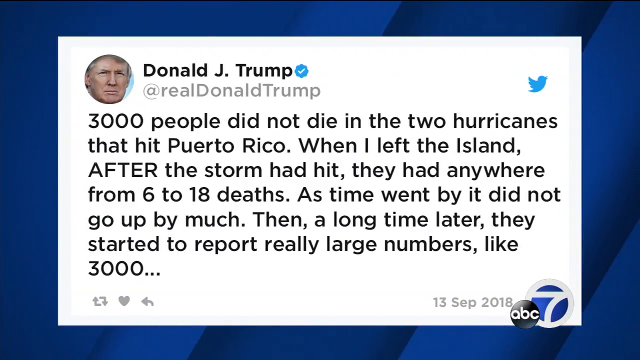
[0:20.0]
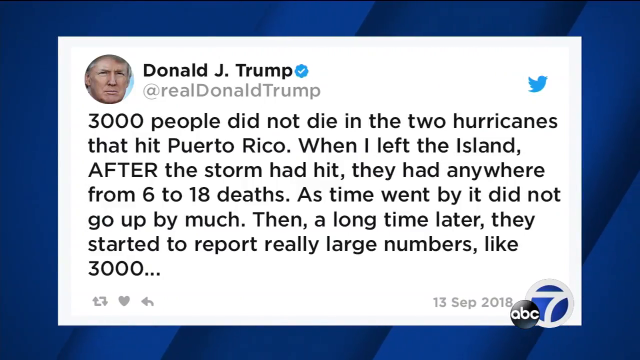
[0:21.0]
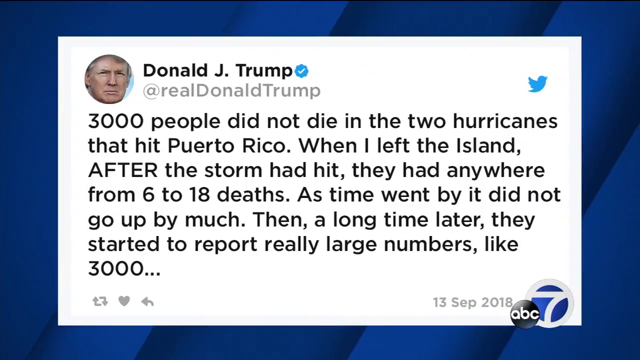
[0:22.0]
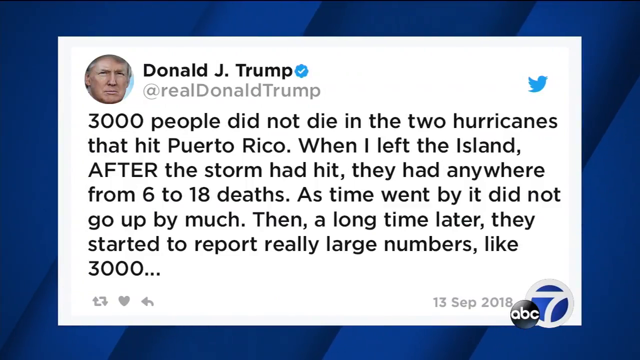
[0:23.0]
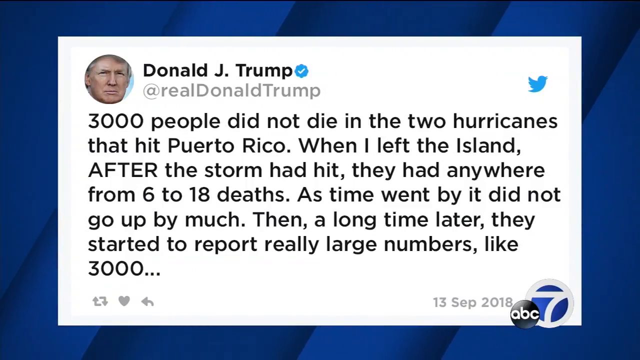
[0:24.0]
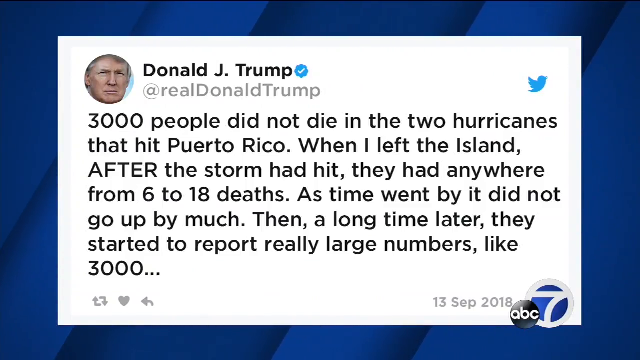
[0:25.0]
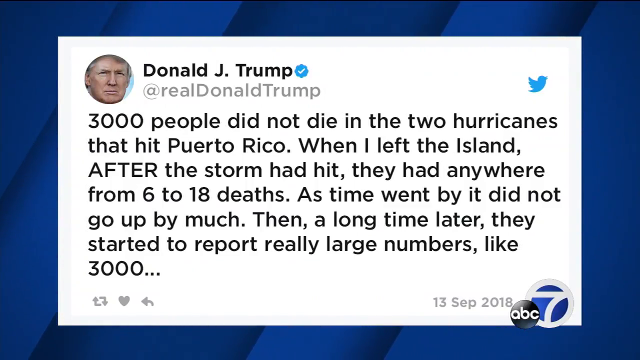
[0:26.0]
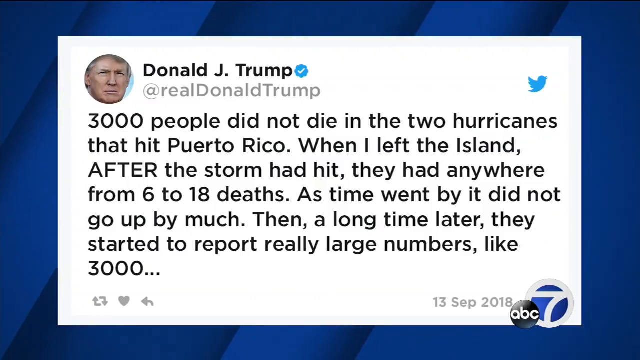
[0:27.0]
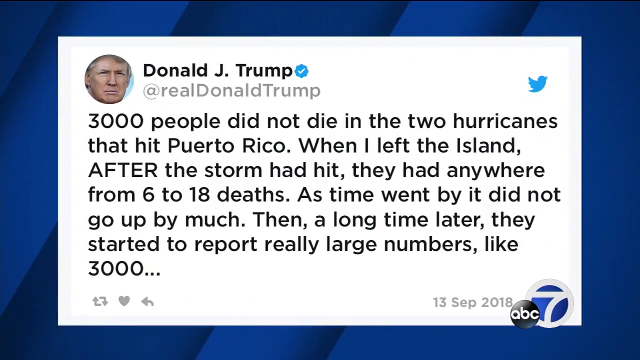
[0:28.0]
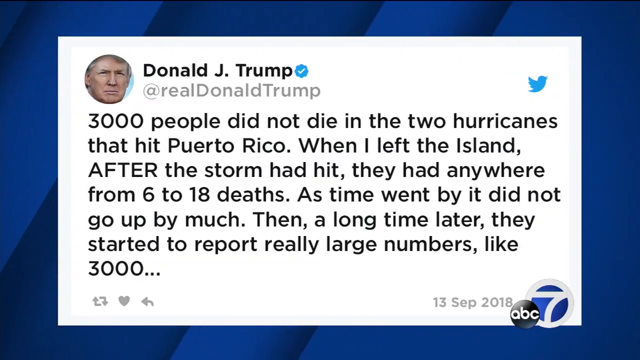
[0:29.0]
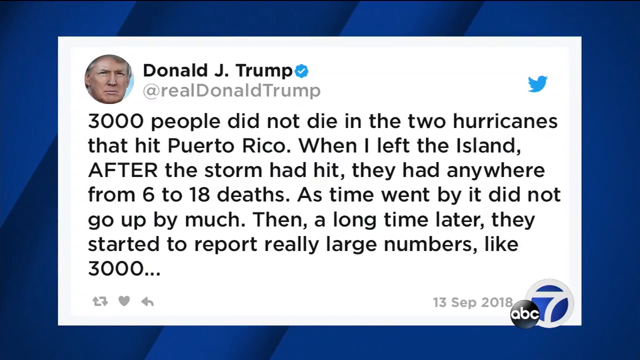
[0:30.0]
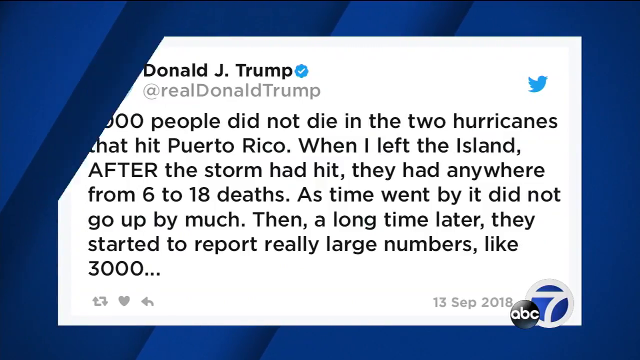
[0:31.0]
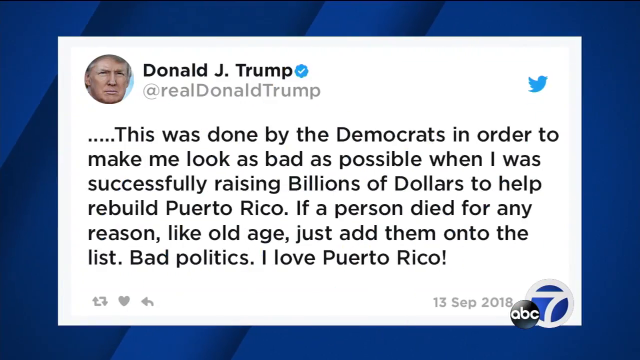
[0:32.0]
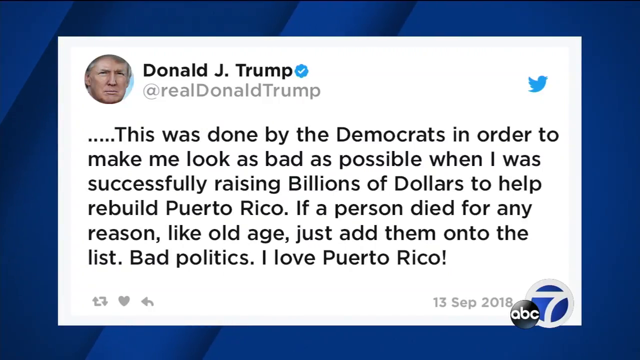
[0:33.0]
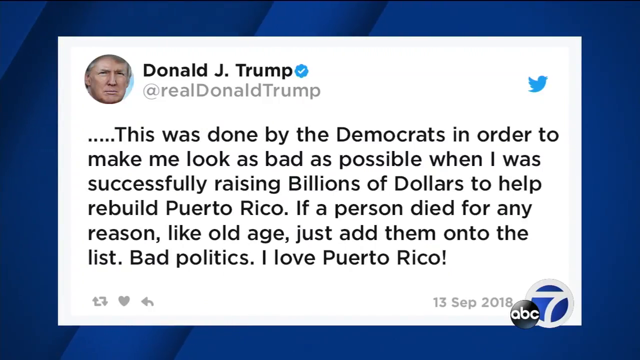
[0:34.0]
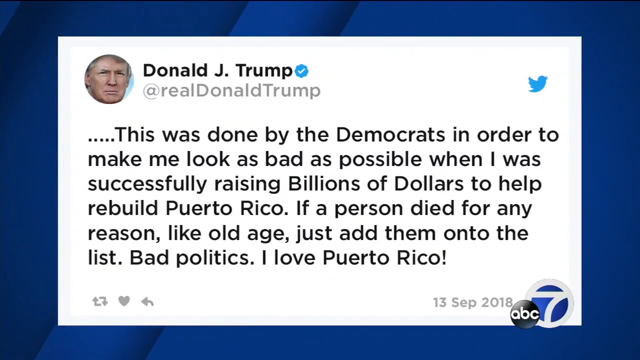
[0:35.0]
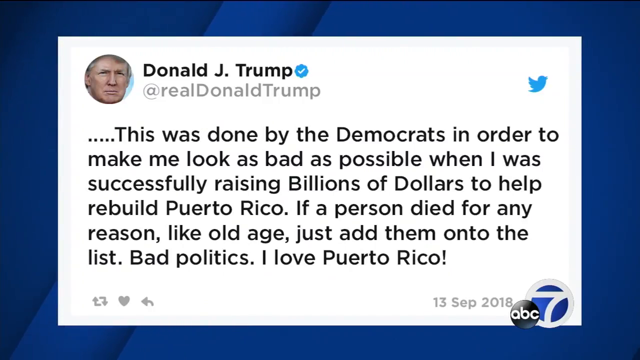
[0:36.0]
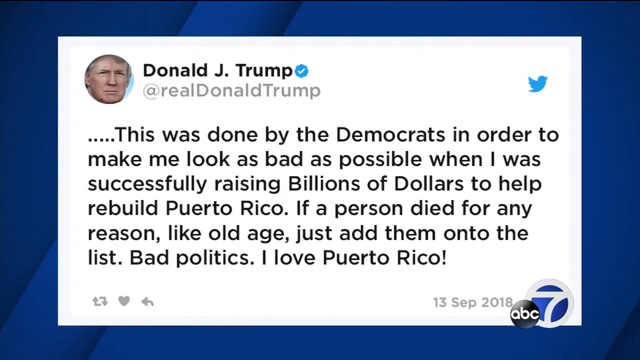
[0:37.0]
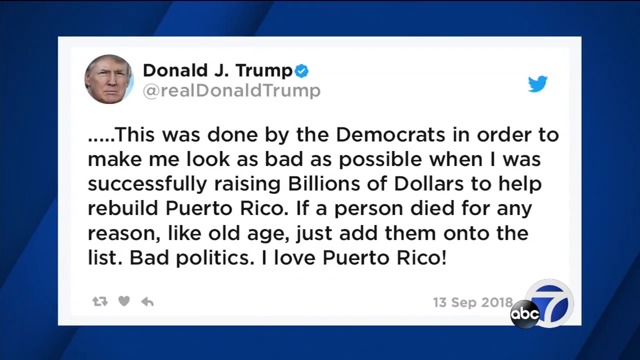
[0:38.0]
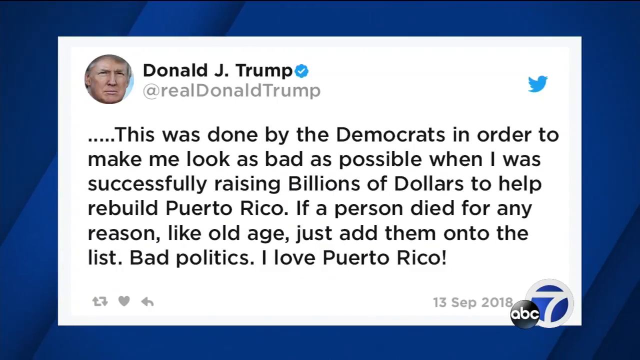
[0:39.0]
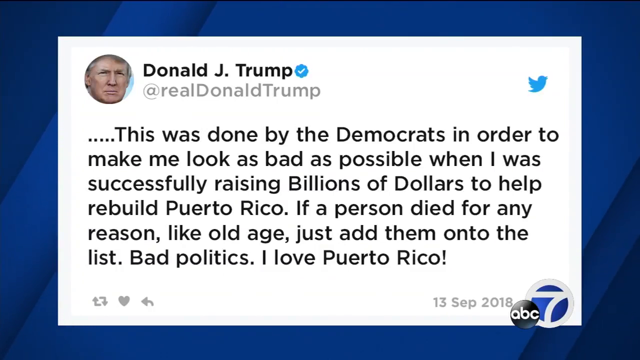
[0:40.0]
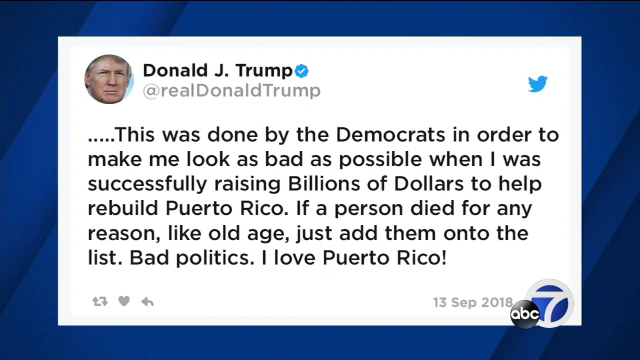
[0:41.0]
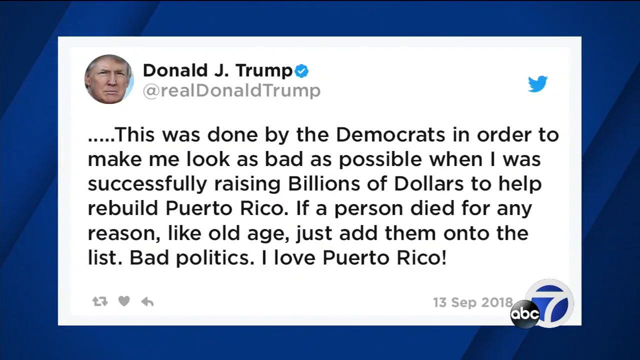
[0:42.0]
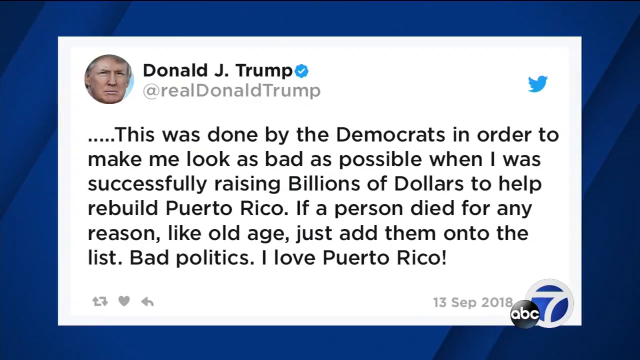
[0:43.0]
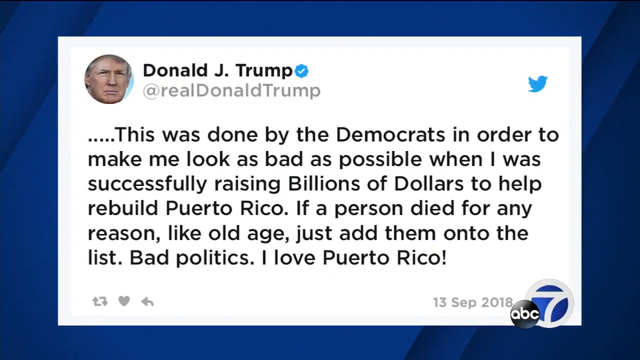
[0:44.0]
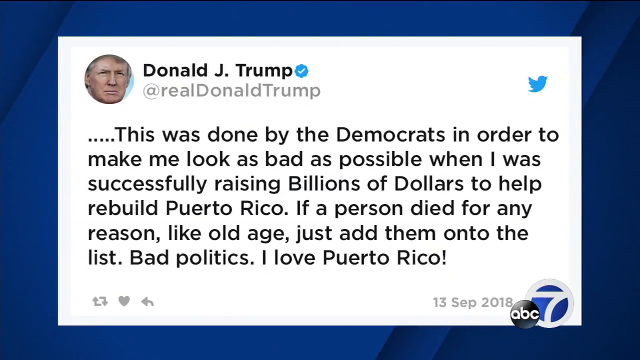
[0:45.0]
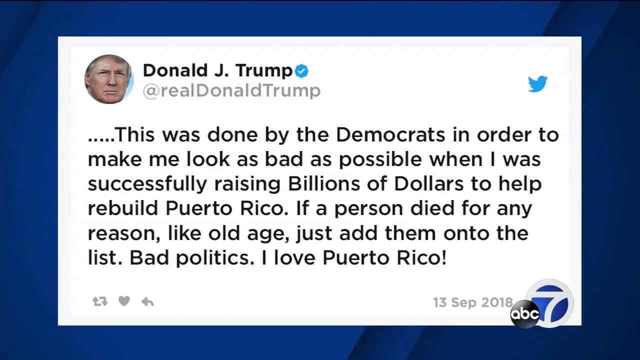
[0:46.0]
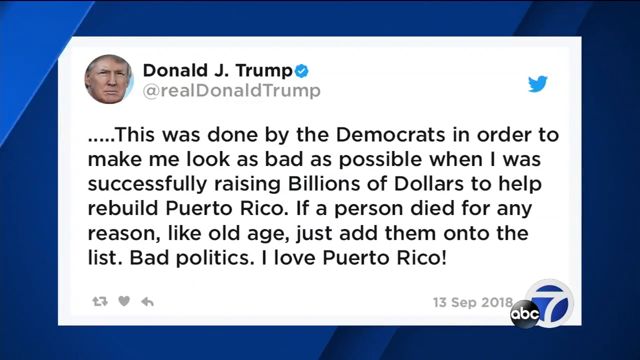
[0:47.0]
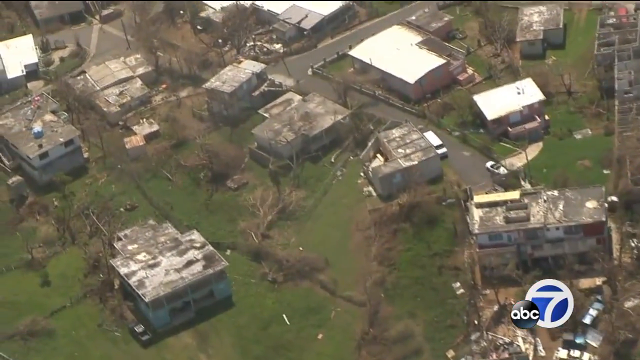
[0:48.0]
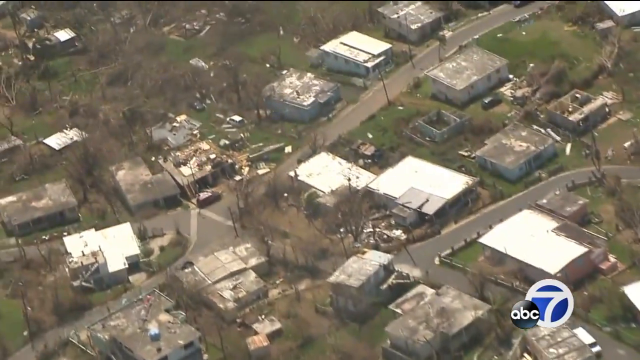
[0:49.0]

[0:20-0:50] The same tweet stays on the scrolling blue background for a while. Eventually it disappears and another tweet from Donald Trump scrolls in from the right side. It reads: "This was done by the Democrats in order to make me look as bad as possible when I was successfully raising billions of dollars to help rebuild Puerto Rico. If a person died for any reason, like old age, just add them onto the list. Bad politics. I love Puerto Rico." This tweet is shown for a while, then the blue background scrolls over it from the left side and the video cuts to very shaky aerial footage of a suburban area with many small residential houses that appear to be in some disrepair. The camera pans upward in a very uneven fashion.